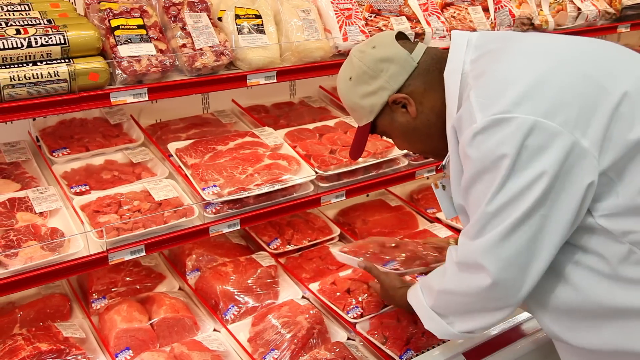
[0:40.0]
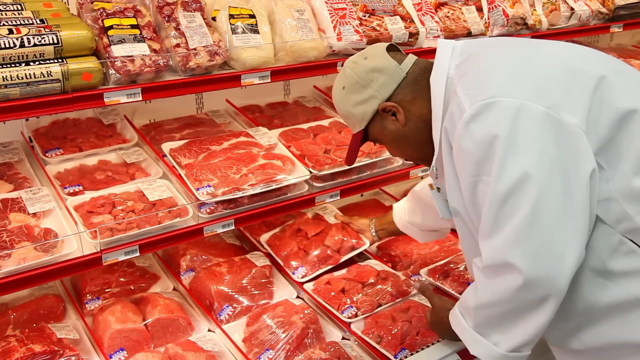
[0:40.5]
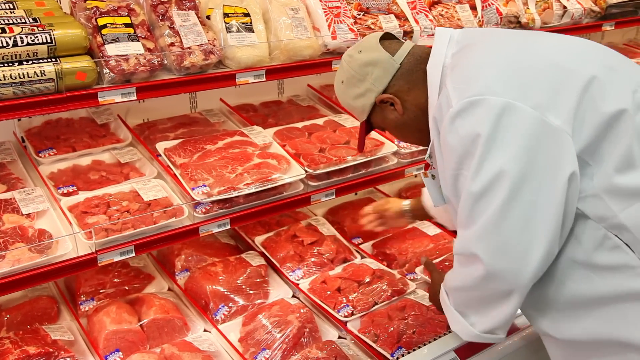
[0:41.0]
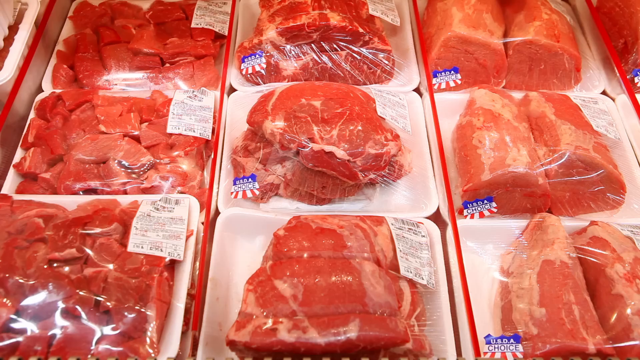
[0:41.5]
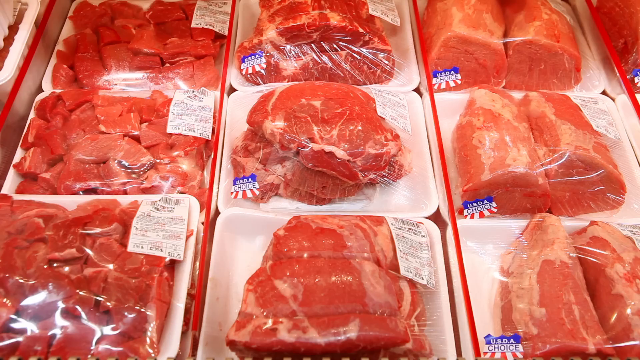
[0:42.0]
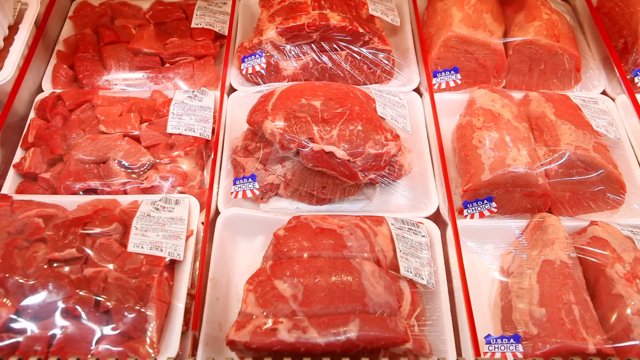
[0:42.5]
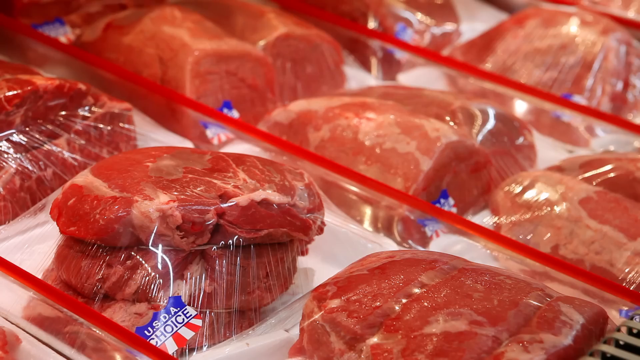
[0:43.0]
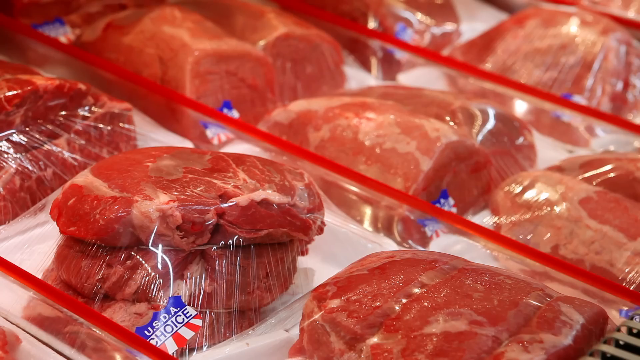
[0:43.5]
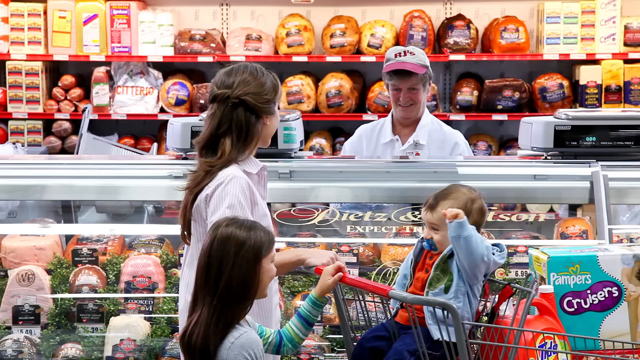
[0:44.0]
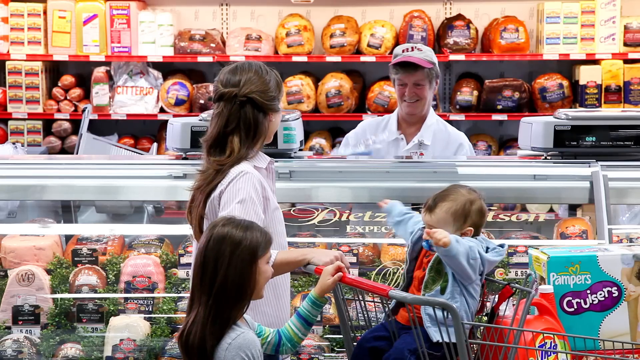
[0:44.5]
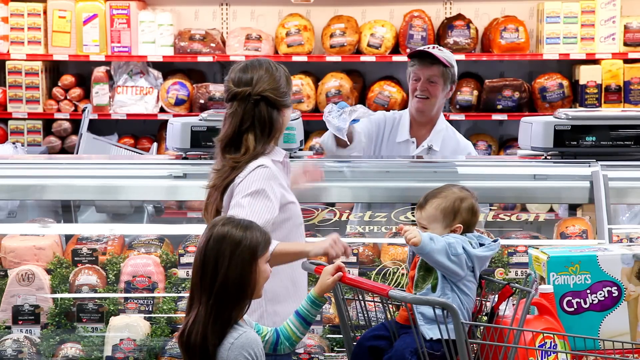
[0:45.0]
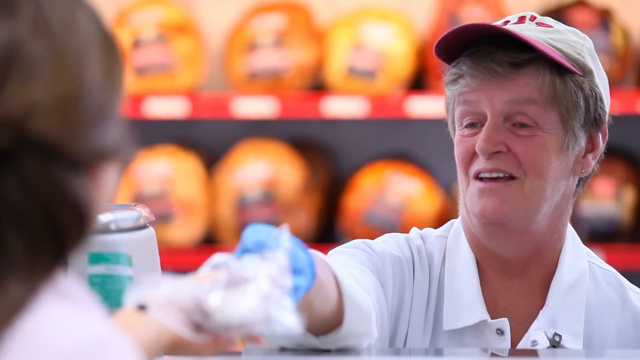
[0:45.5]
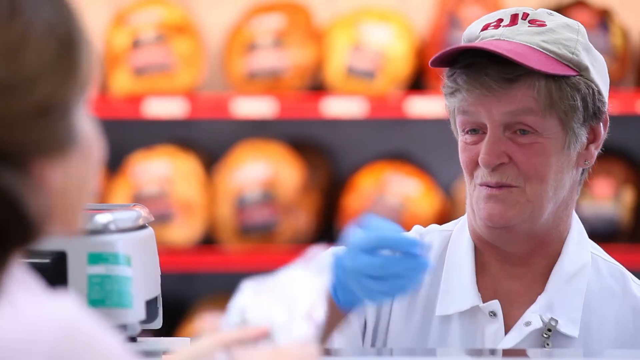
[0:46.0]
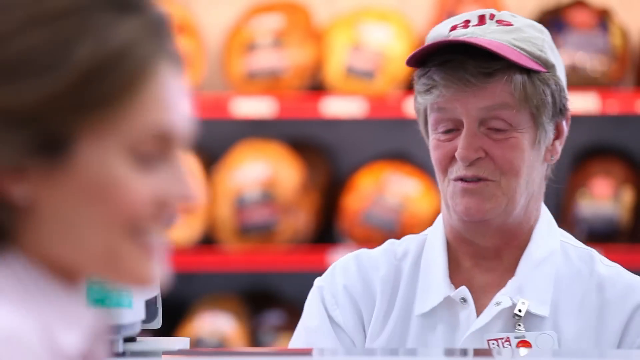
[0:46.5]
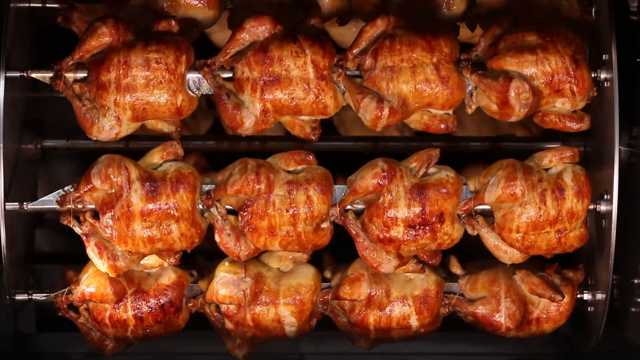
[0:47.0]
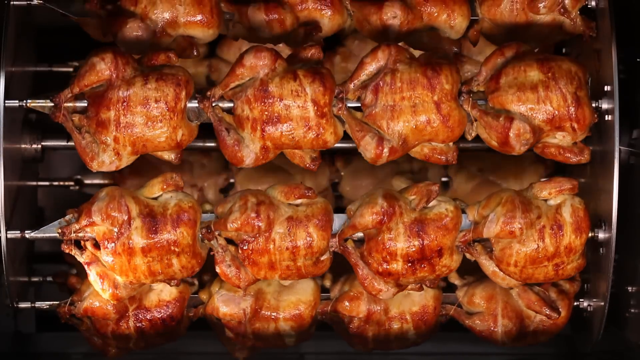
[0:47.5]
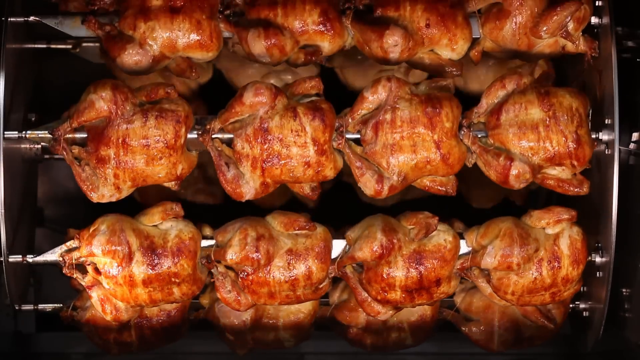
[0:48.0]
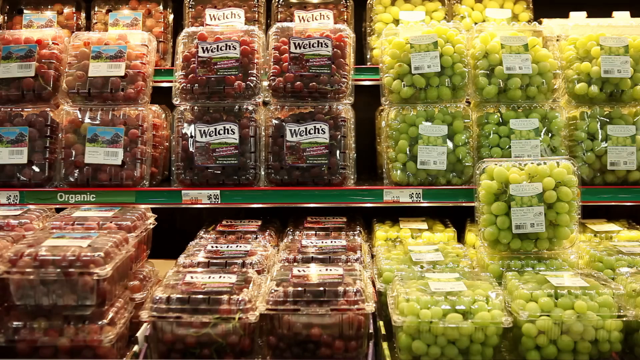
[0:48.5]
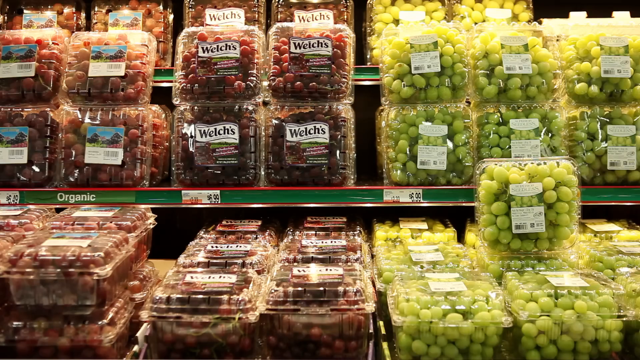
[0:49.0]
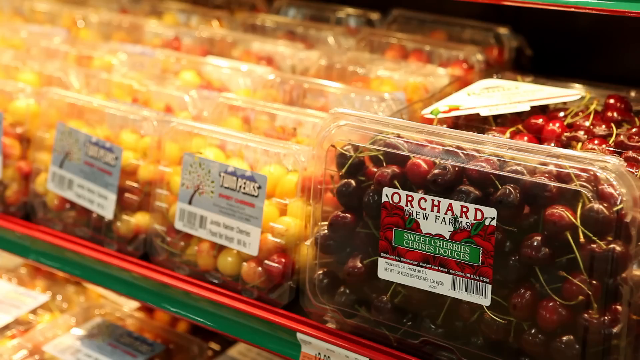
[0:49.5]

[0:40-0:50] A close-up shows the meat. Next, a lady orders some processed meat at the counter; she is the same lady seen at the very beginning of the video, with her cart filled with items in front of her, a baby sat in the cart, and a young girl pushing the cart with her. She takes something from the hand of the staff member behind the counter. A close-up then shows the staff member smiling at the customer. Some chicken is roasting in the oven. A close-up shows some fruit packaged on the shelves, which looks like grapes and cherries, followed by an even closer zoom on the fruit.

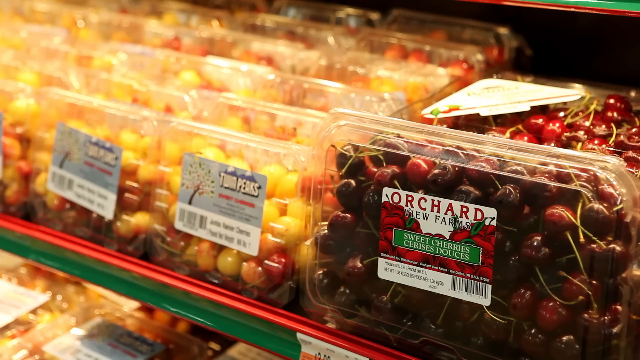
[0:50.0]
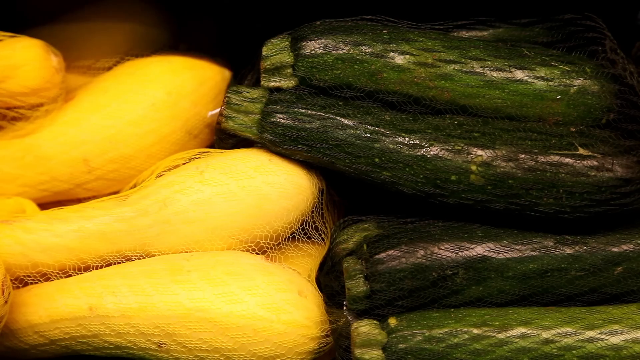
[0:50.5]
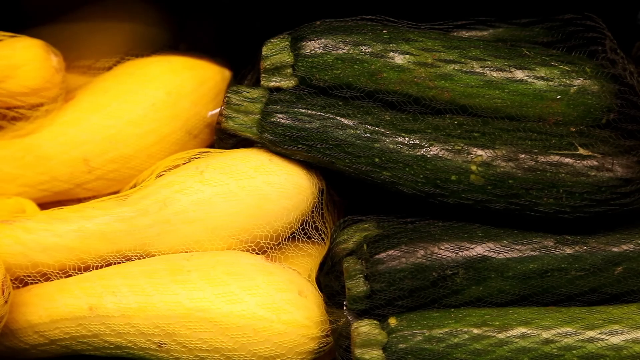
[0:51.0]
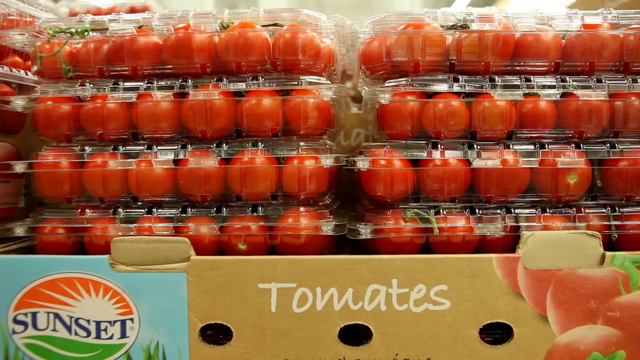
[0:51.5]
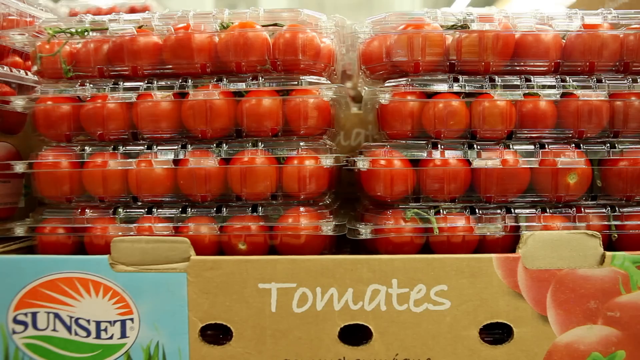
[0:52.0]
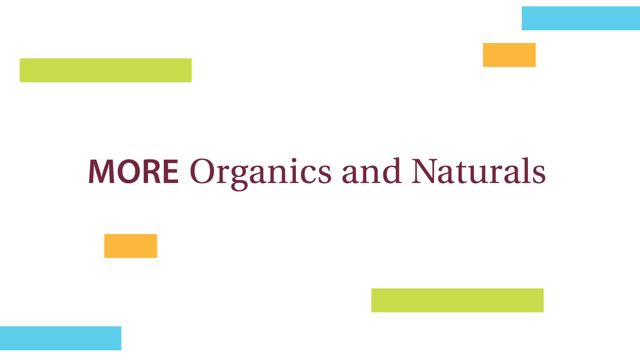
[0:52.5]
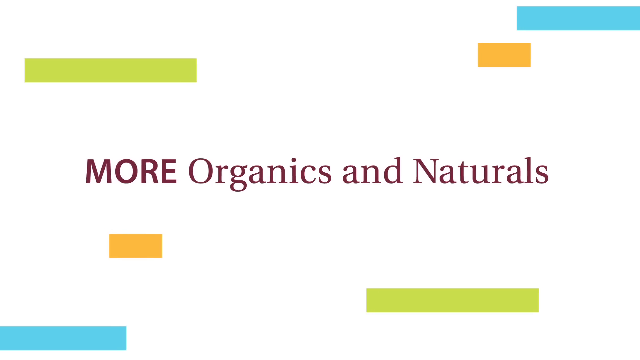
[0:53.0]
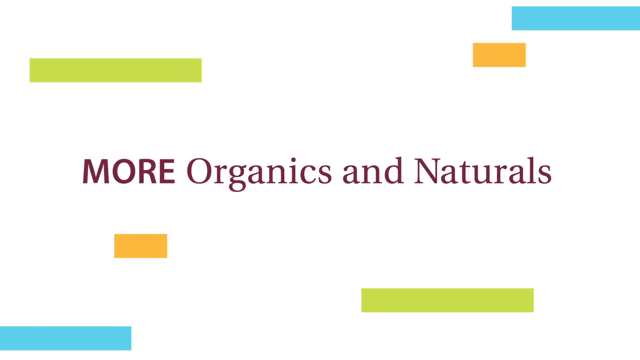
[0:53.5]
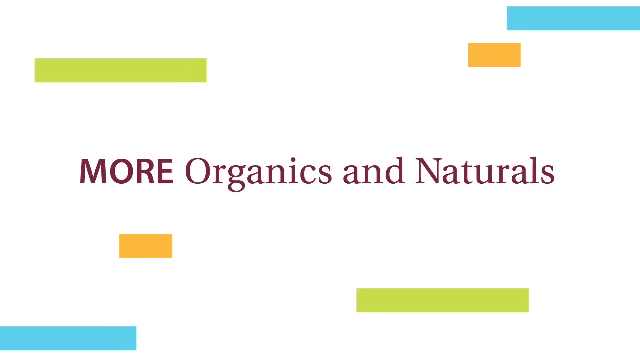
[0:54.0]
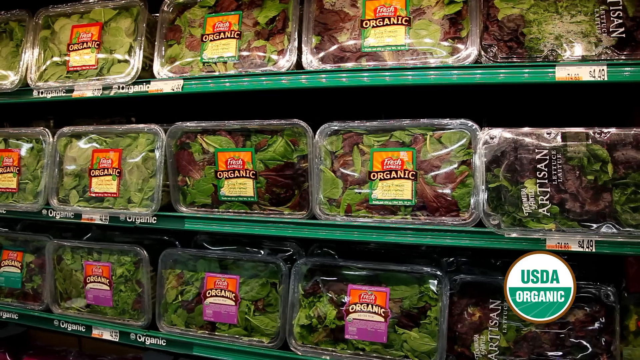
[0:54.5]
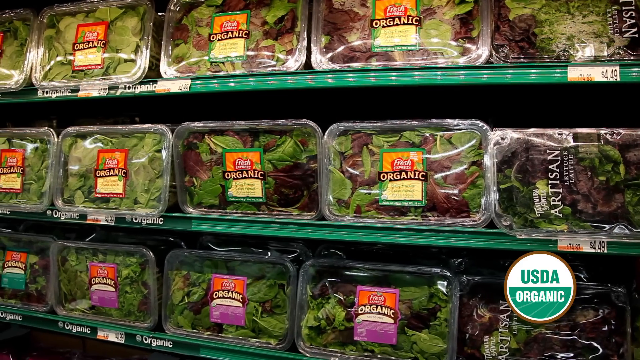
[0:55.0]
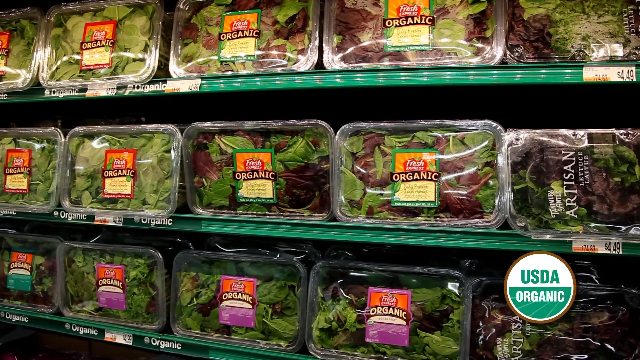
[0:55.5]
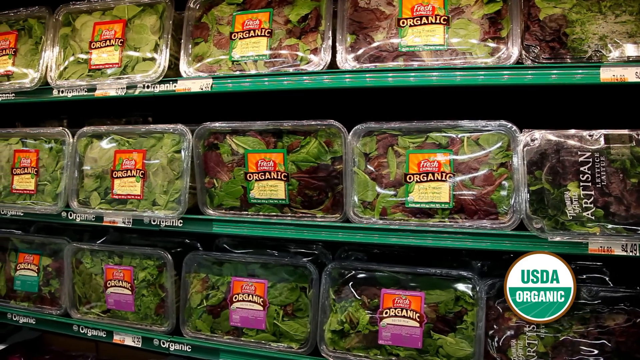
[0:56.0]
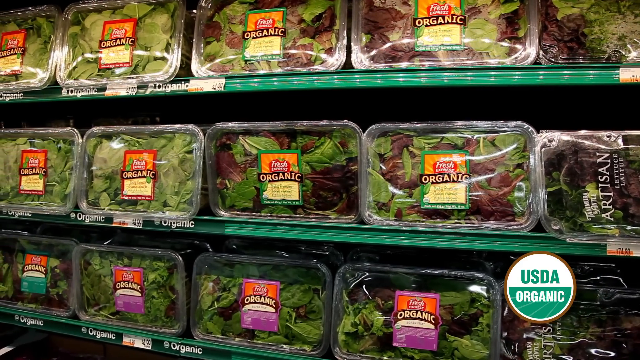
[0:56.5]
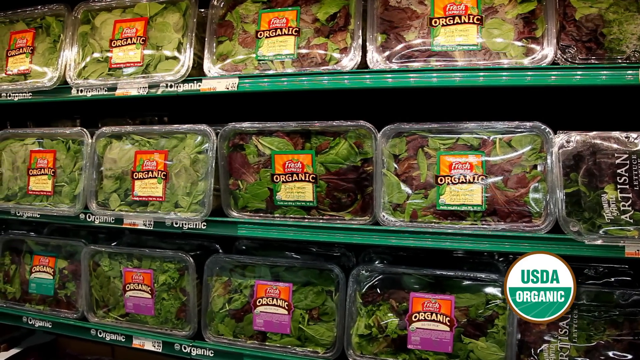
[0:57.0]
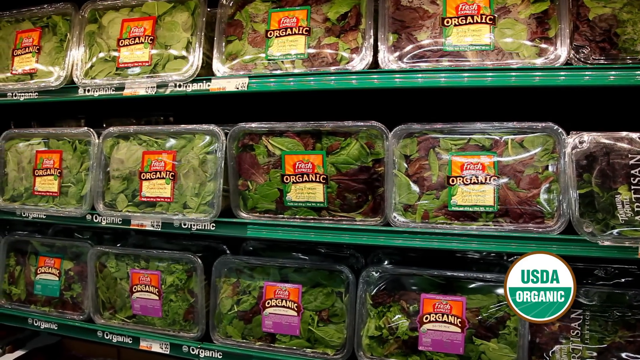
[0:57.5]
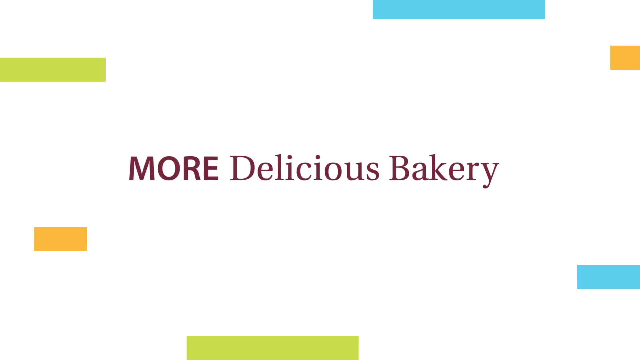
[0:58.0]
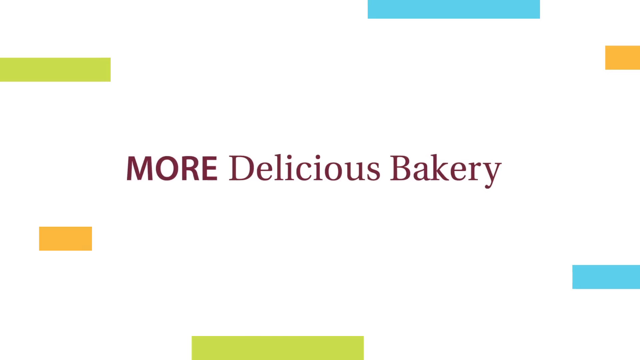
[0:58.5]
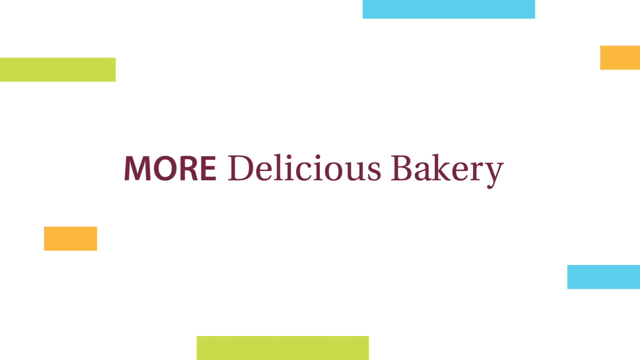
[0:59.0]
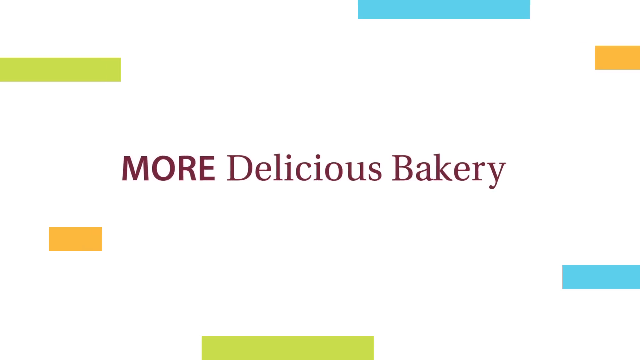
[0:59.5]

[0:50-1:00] A very quick shot shows some yellow and green zucchini. Right after comes a close-up of some tomatoes packaged in plastic containers, piled on top of each other. The white background with geometric shapes appears once again, with the text "more organic and natural" in the middle of the screen. A shot follows of some shelves with packaged vegetables on which the word "organic" can be read, and in the bottom right corner there is a logo that reads "USDA organic". The white background with shapes appears again, with the text "More Delicious Bakery" in the middle.